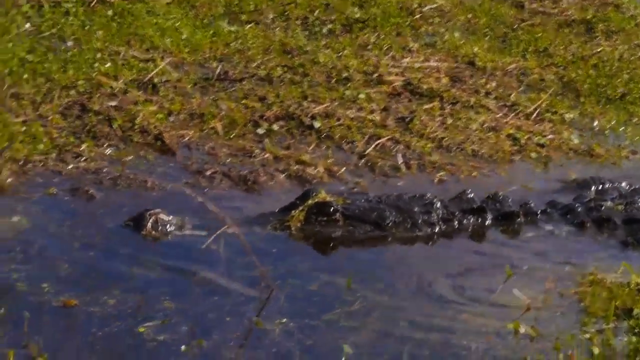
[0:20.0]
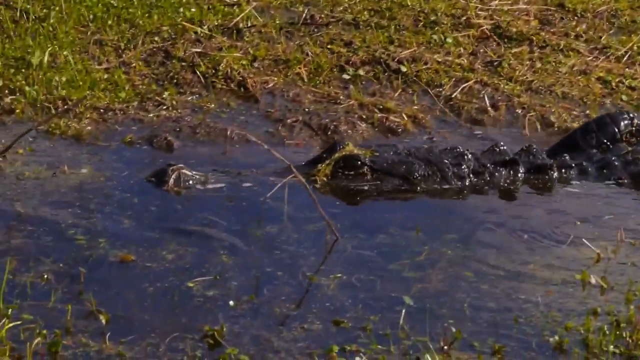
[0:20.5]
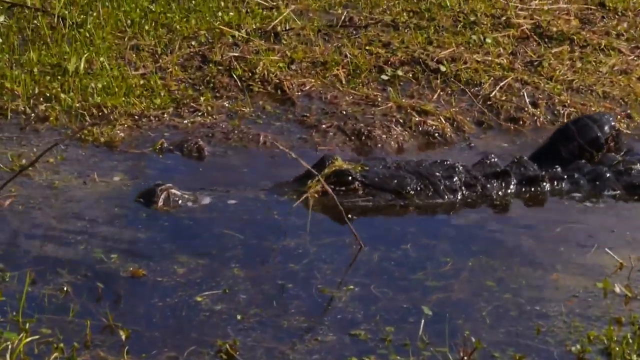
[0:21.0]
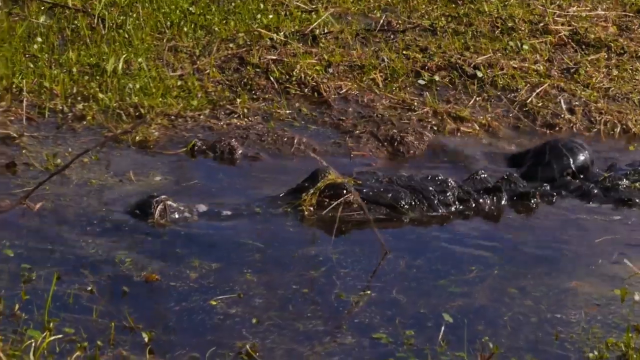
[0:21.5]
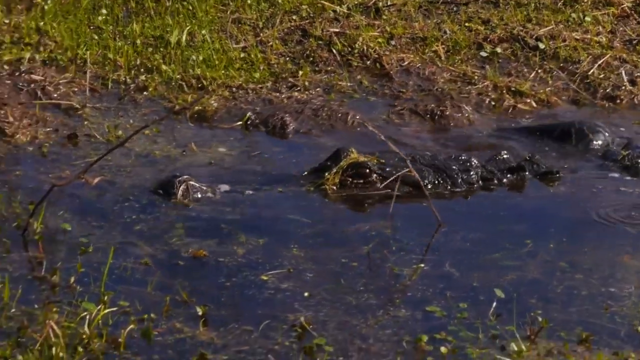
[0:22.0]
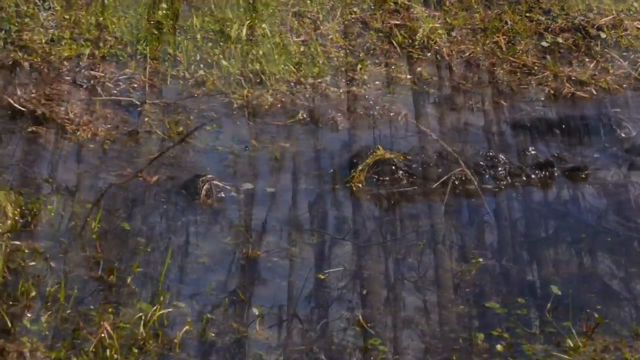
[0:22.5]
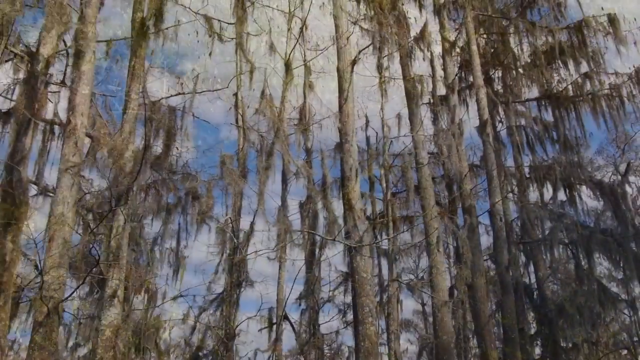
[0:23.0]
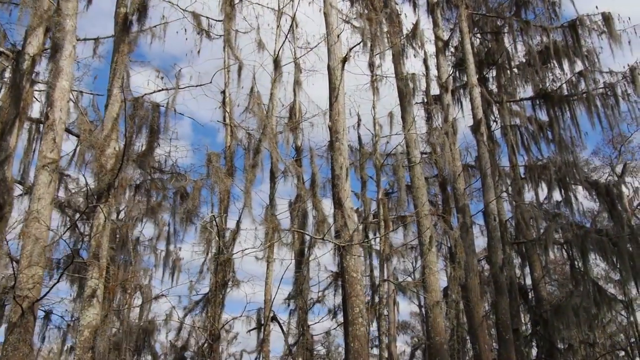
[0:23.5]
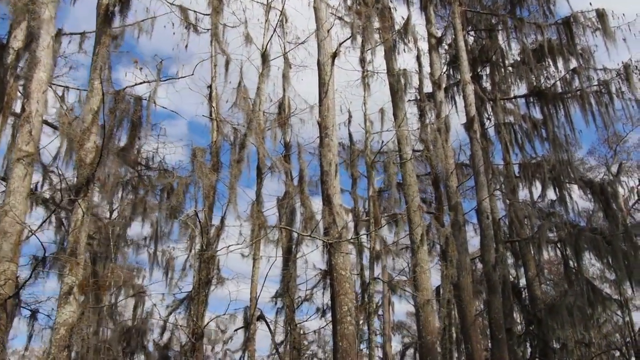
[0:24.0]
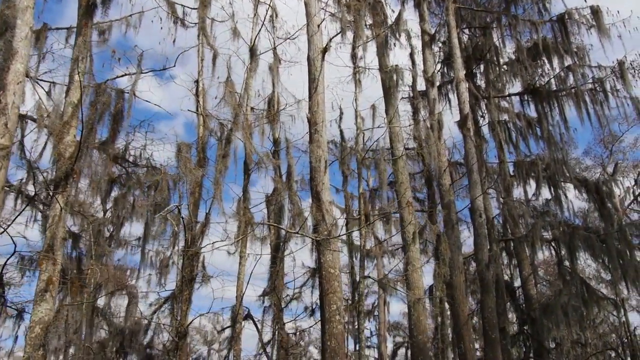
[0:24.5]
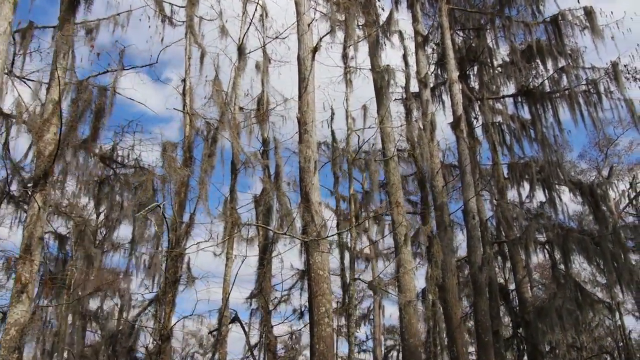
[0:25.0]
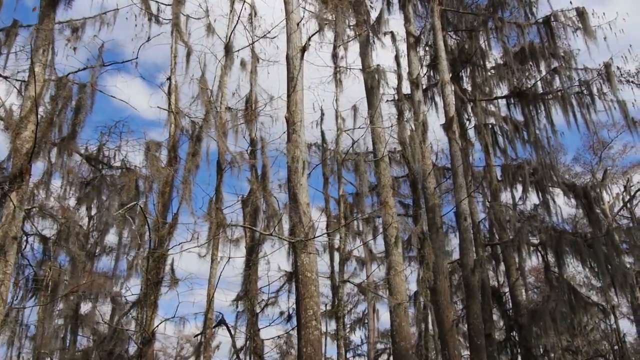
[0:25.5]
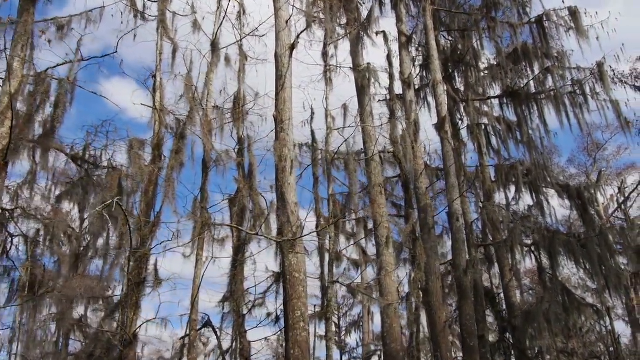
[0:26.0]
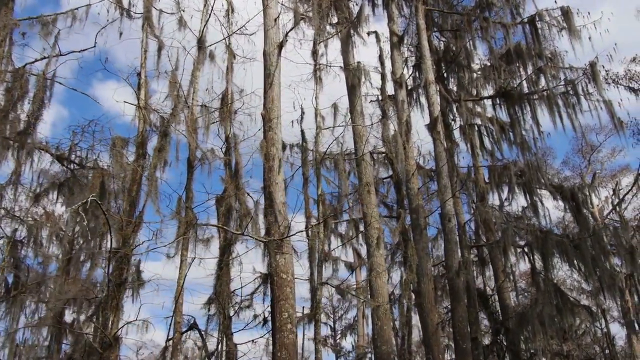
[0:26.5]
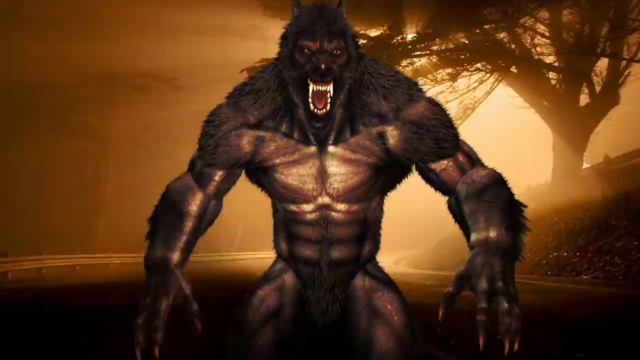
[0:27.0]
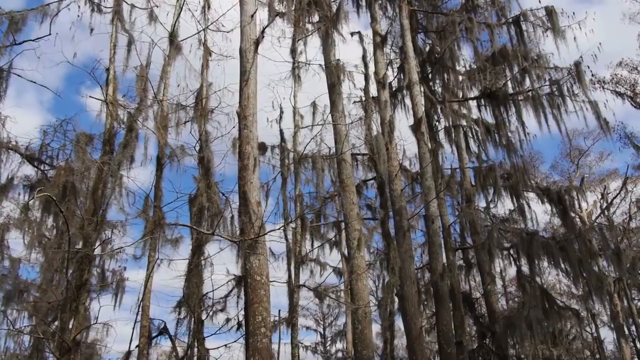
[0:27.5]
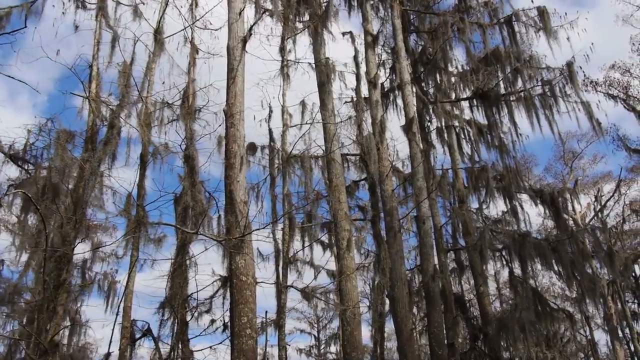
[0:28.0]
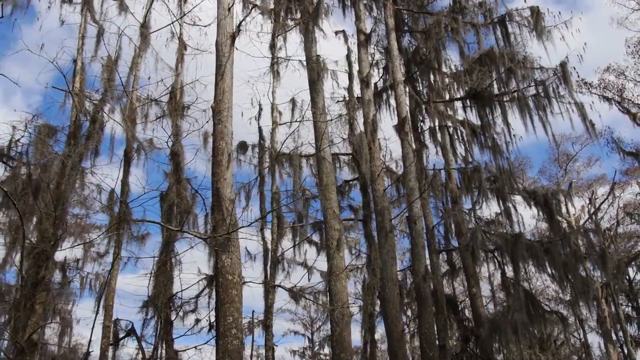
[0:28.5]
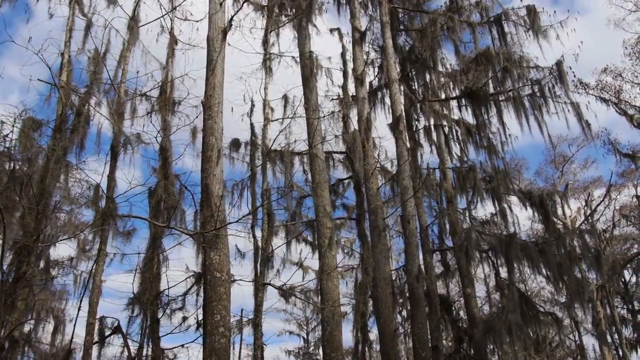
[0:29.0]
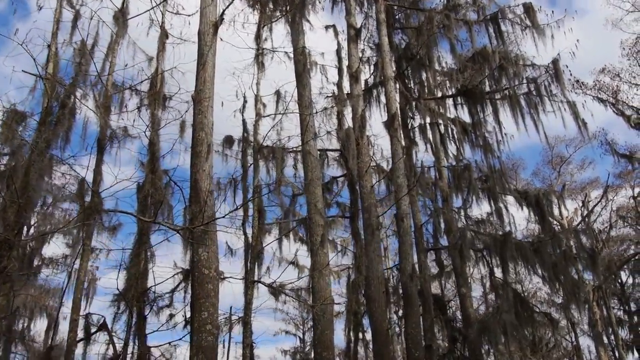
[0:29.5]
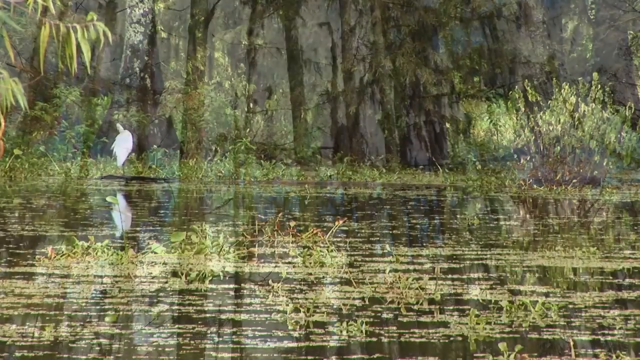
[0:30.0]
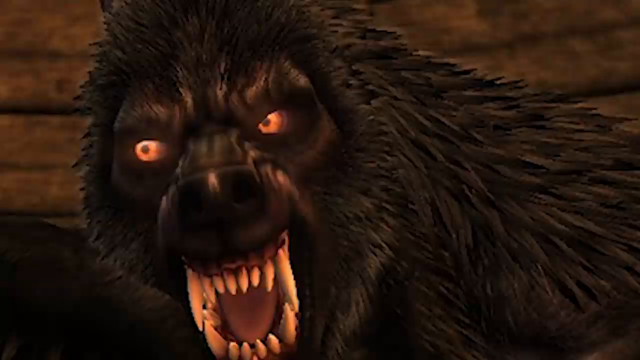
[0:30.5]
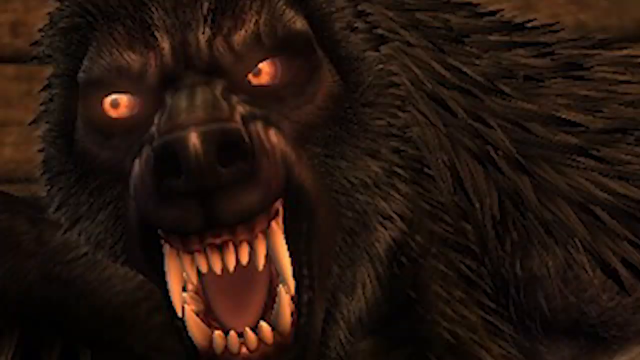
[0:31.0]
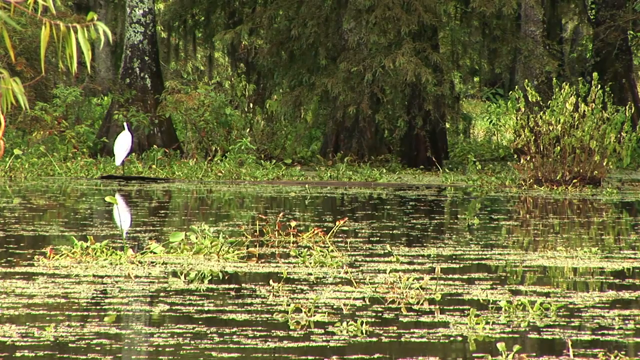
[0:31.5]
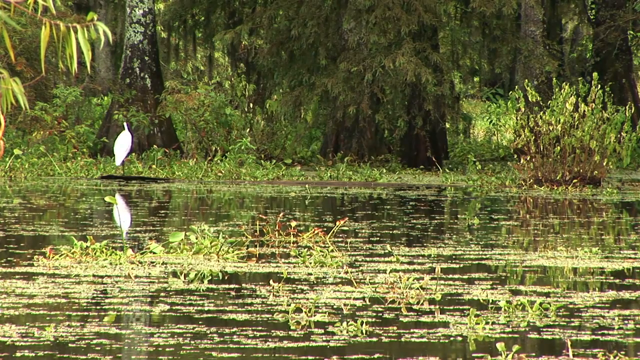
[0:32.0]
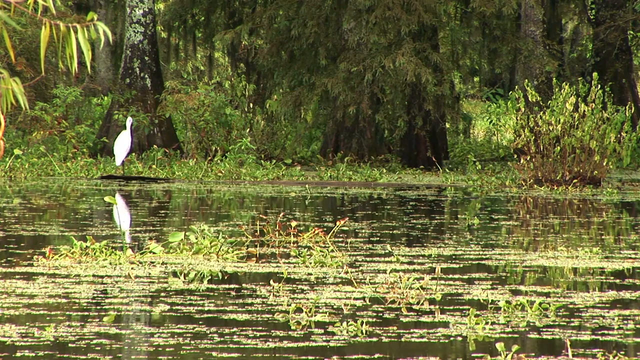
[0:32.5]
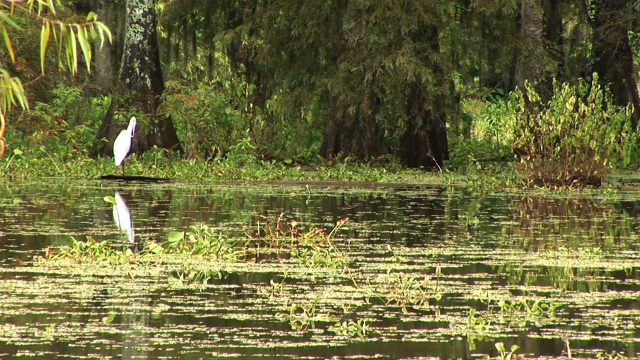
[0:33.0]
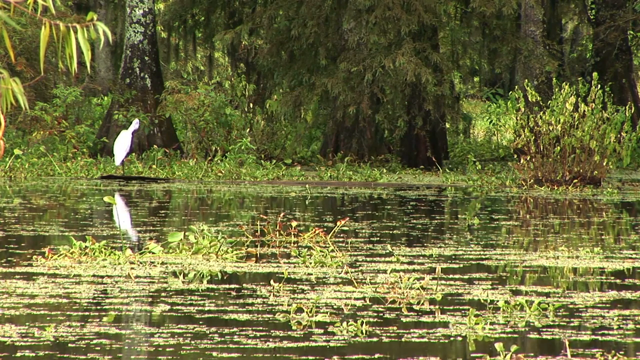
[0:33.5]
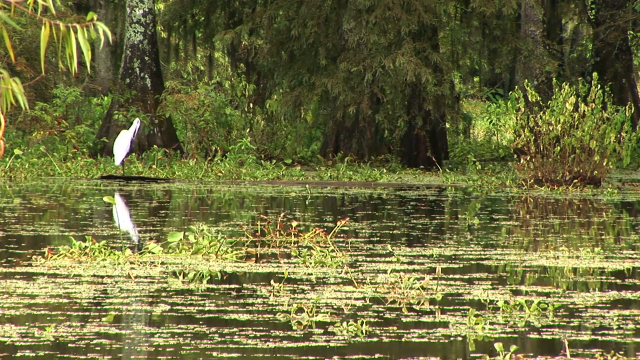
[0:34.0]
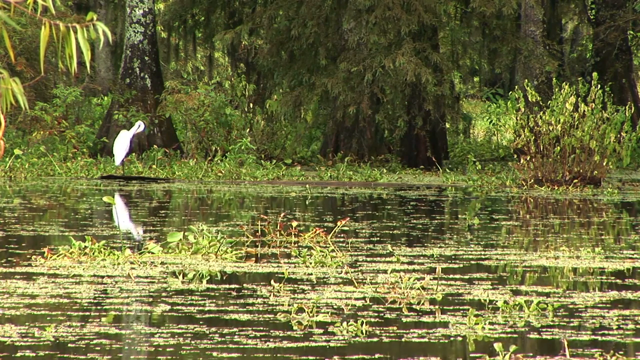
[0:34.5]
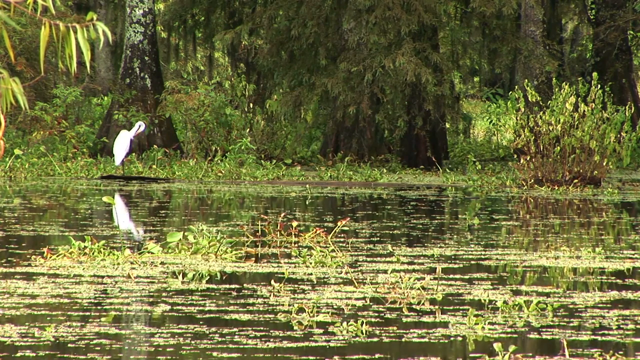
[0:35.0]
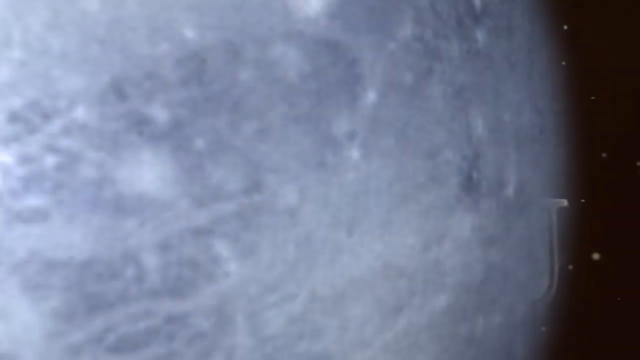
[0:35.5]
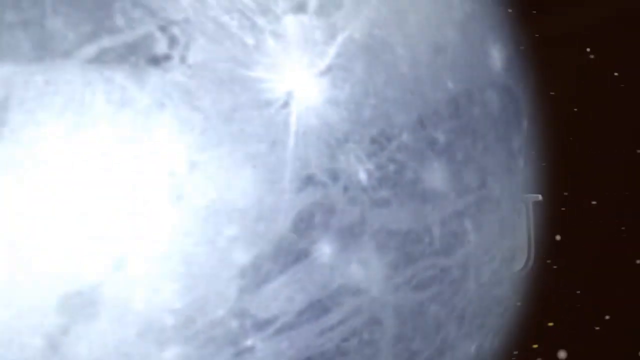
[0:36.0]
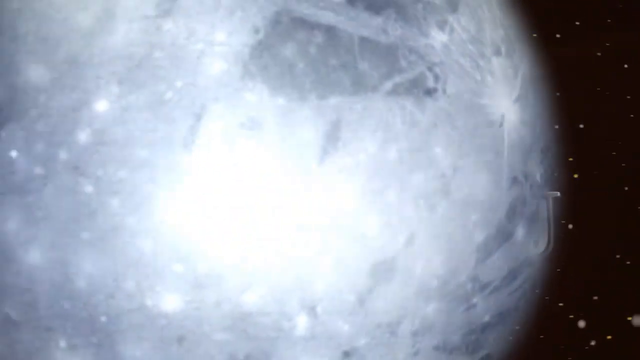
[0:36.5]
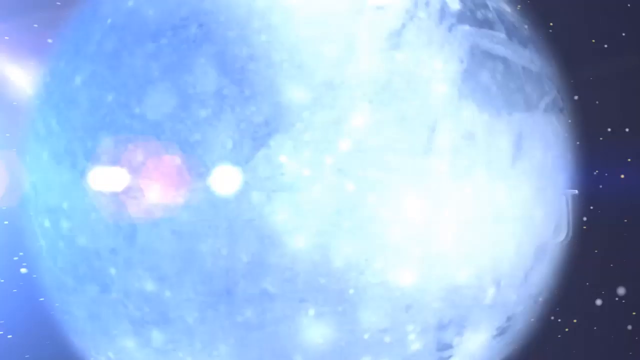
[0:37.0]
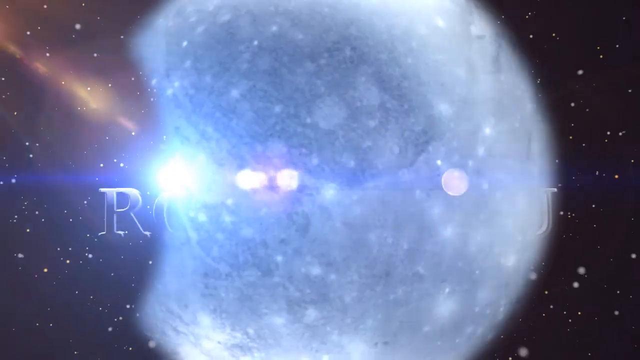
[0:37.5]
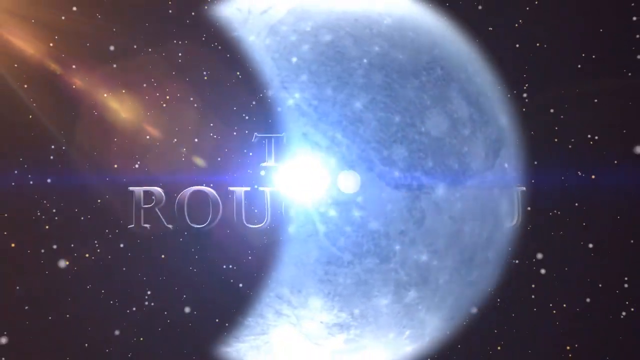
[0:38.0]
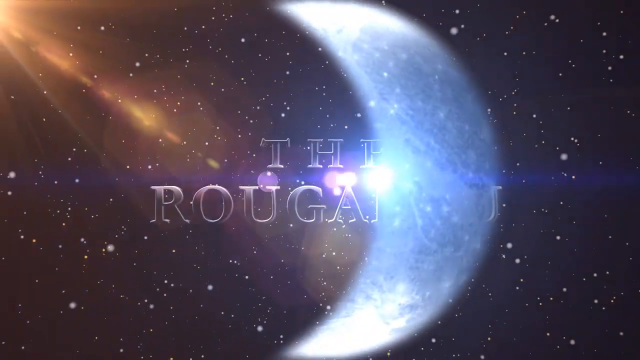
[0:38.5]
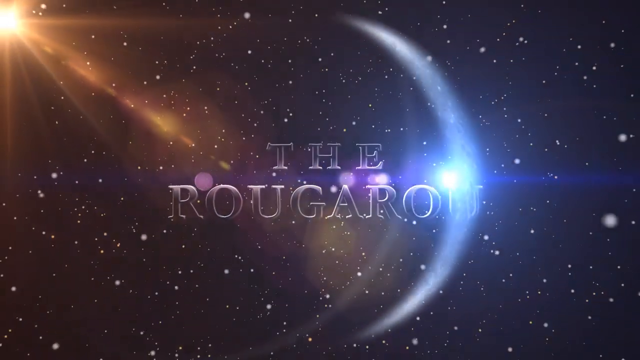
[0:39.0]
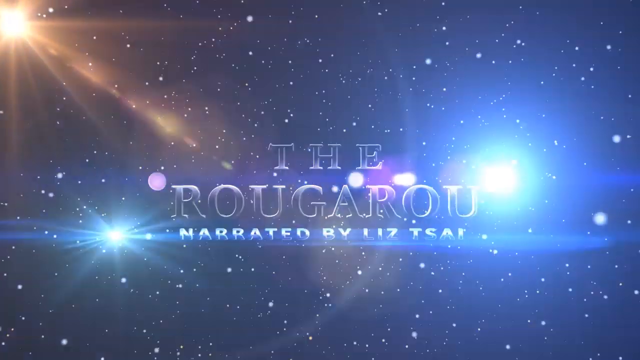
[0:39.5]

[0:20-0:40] An alligator peers out of the water in a bog or bayou, with algae and plant growth on top of the water. The alligator kind of wades through the water. In a new scene, tall trees that look like swamp trees appear, with images of a werewolf flashing in between, and then the trees appear again. Next there is a bird, apparently an egret, in the swampy water. More pictures of a werewolf flash on the screen in between the egret footage, including a scary werewolf with its mouth open, while the bird kind of pecks at its feathers. Then a shot of the moon scrolls and spins around, and after the moon spins, text appears reading "the Ragnarok narrated by Liz Tissaia".